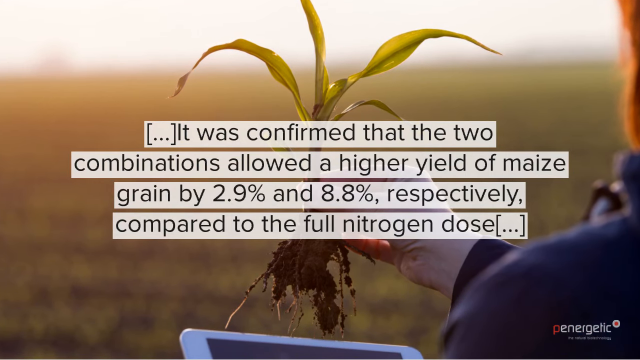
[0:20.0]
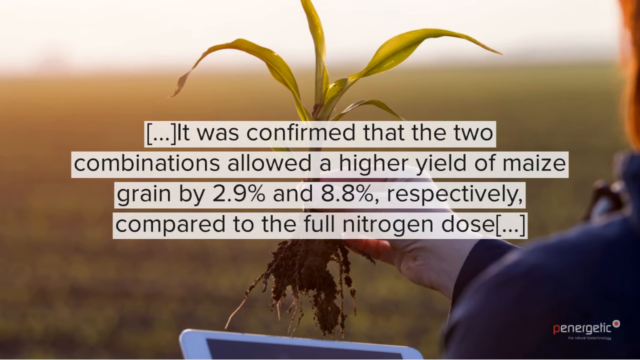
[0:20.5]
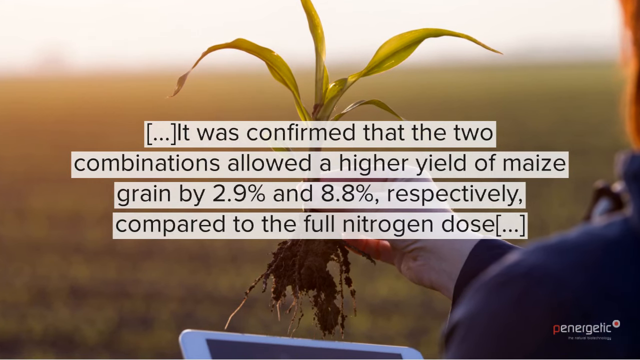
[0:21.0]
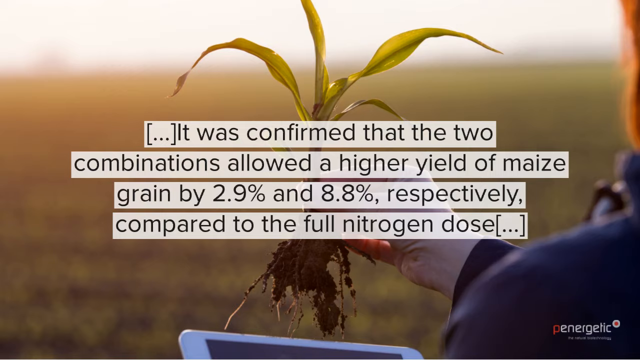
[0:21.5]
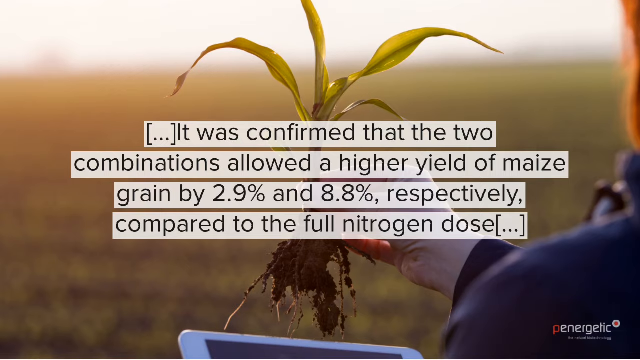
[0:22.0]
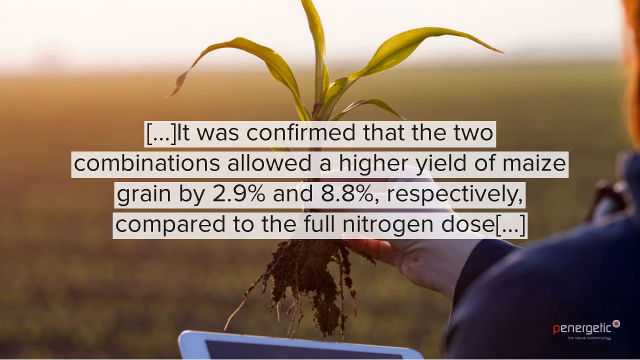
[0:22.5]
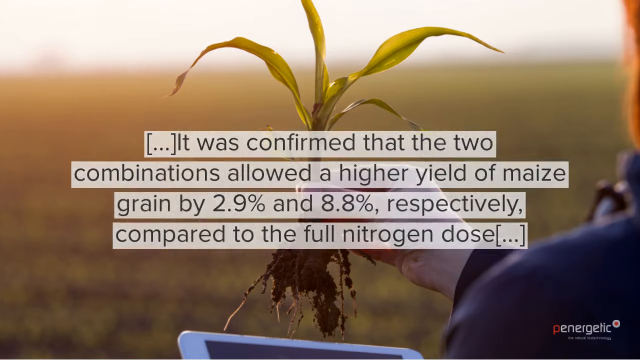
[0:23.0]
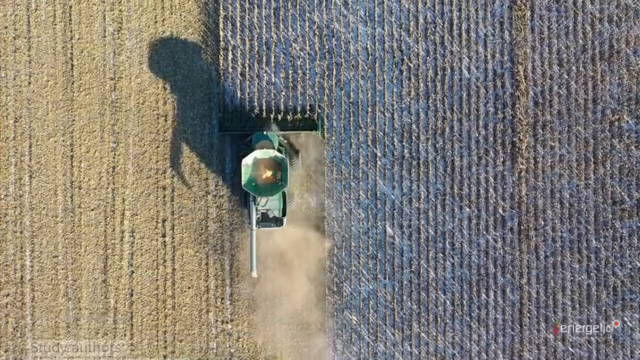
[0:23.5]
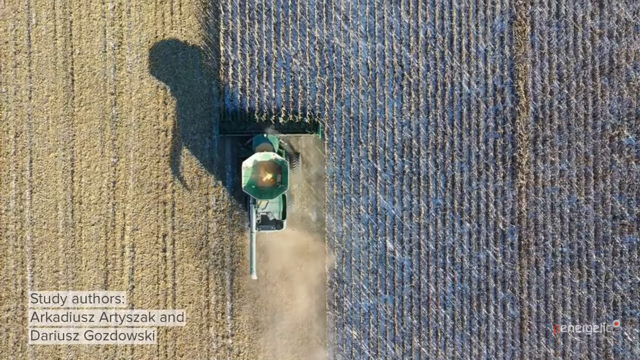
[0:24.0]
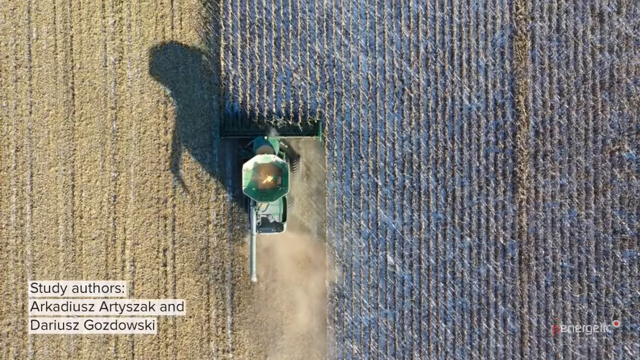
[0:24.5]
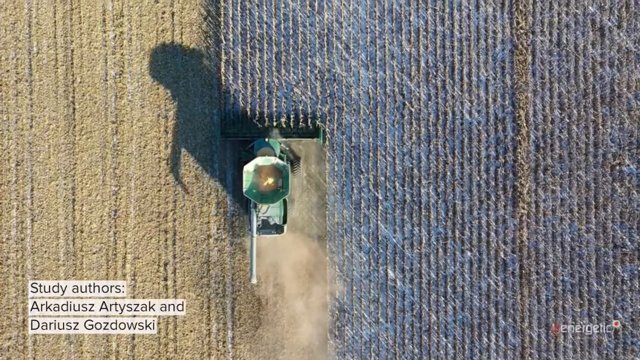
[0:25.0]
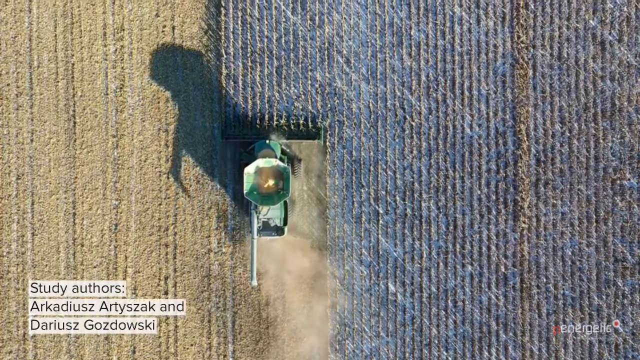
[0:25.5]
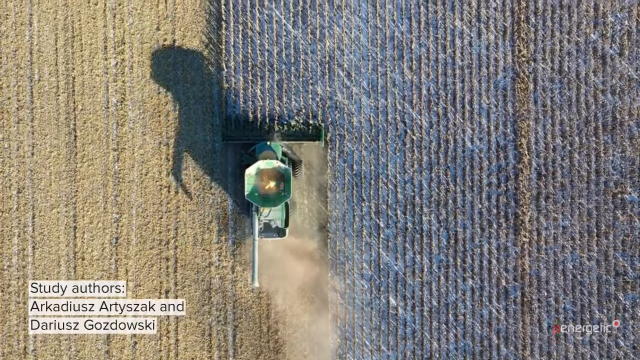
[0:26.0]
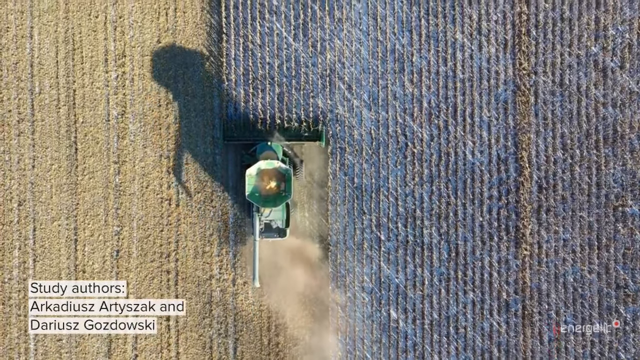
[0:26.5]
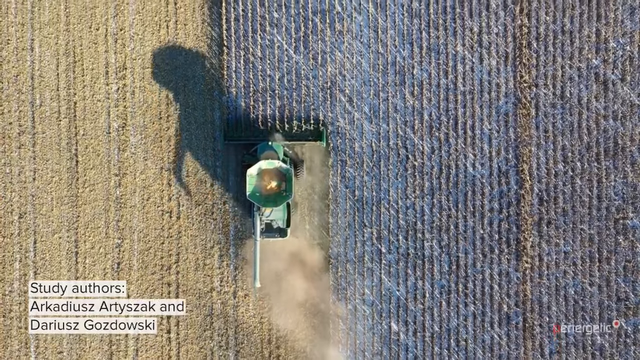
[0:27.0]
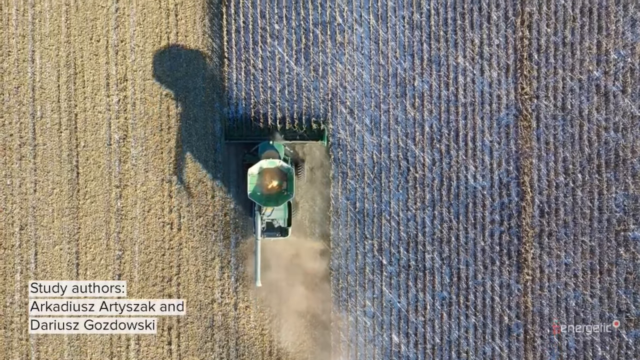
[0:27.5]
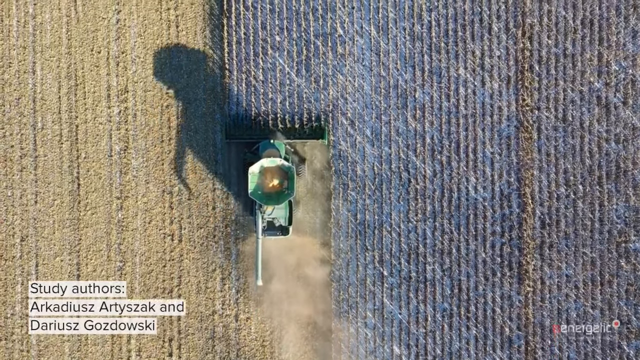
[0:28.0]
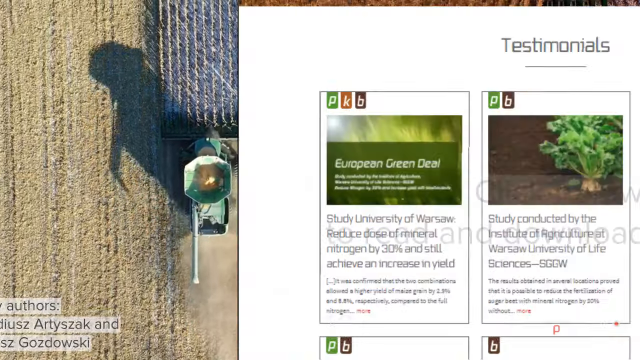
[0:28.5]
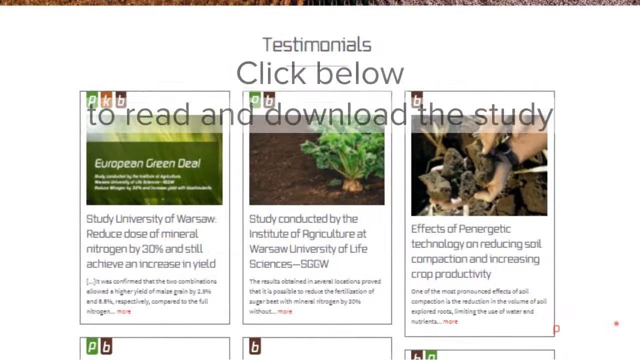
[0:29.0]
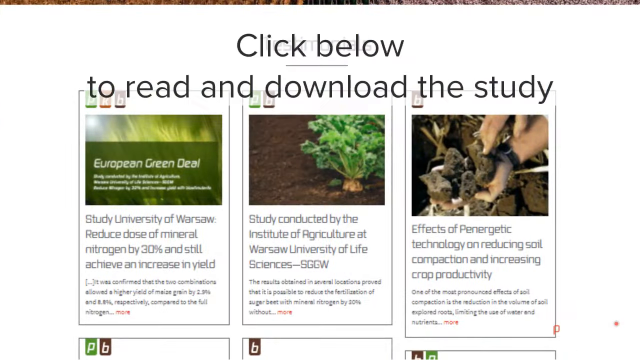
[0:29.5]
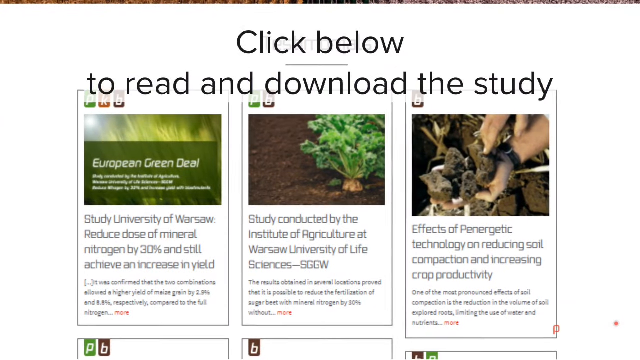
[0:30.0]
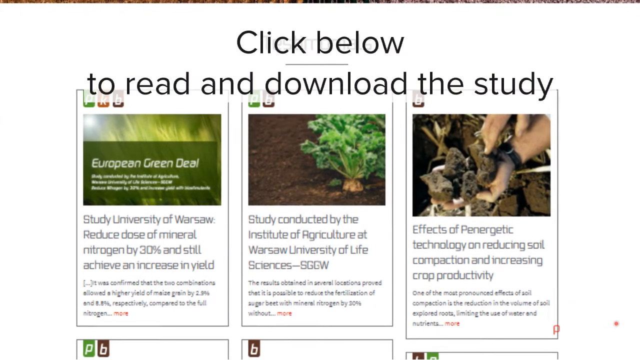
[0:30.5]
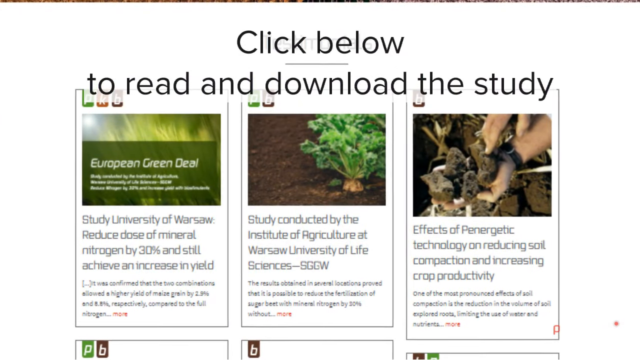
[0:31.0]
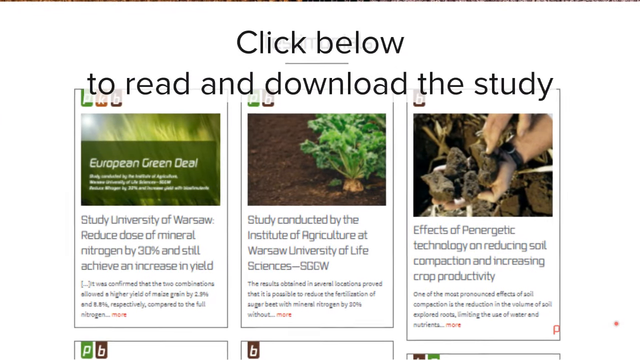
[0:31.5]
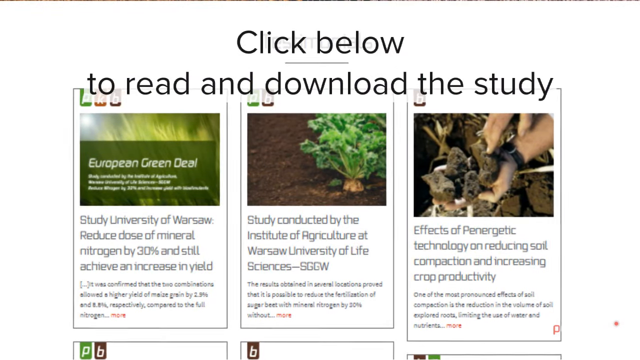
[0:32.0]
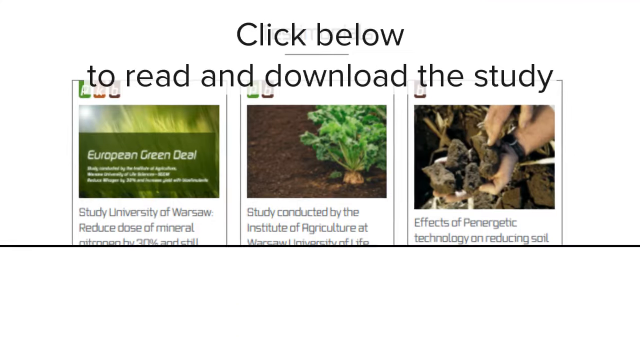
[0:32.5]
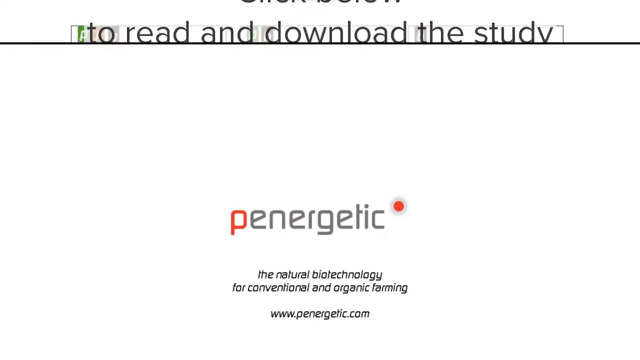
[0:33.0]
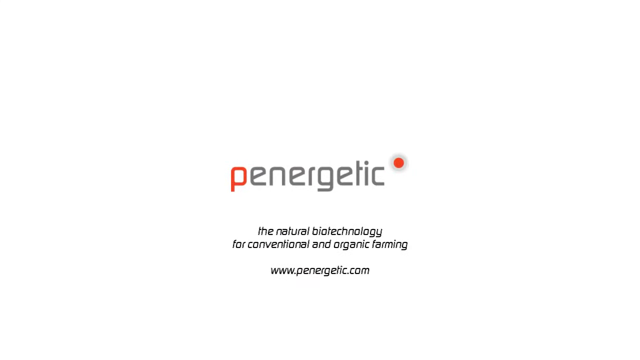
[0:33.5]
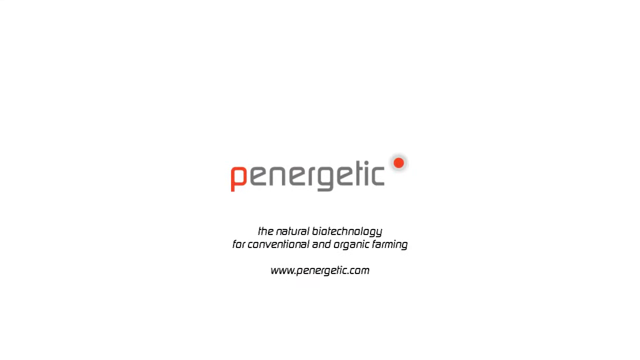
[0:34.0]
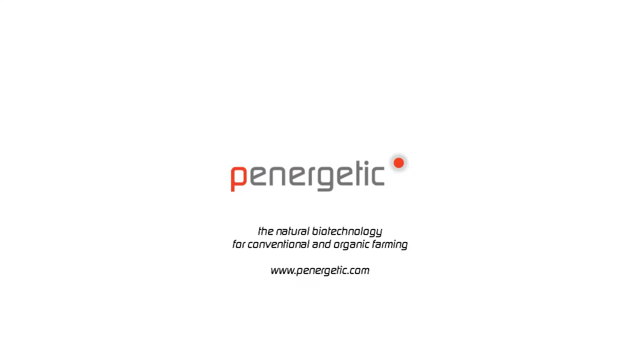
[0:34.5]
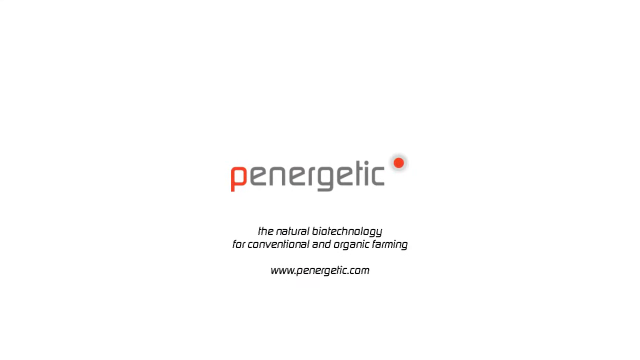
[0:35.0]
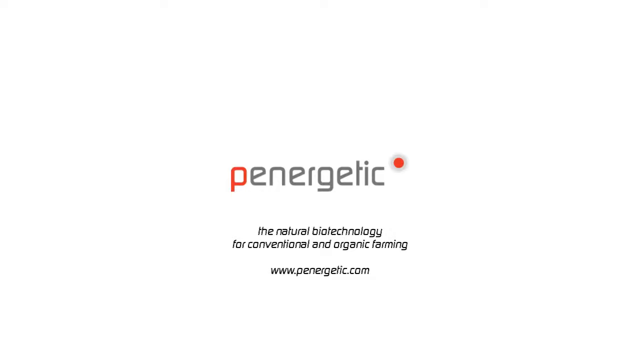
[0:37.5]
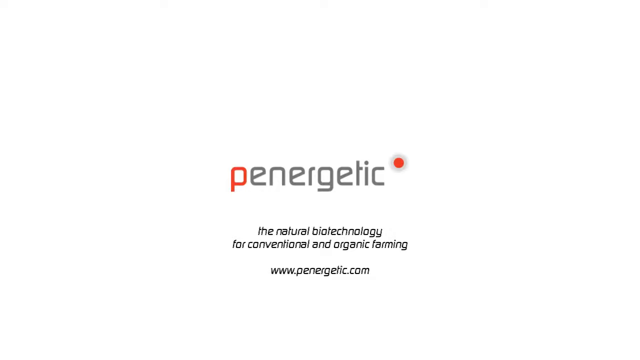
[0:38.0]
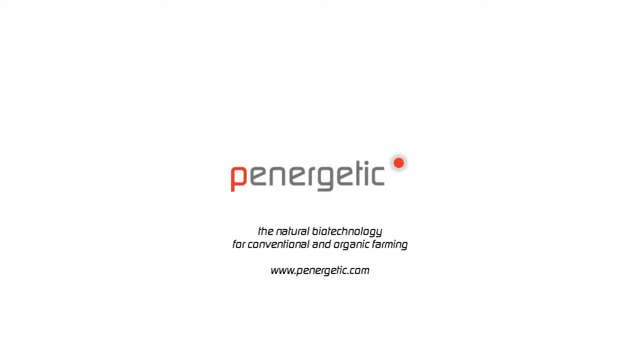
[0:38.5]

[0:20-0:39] A video shows a tractor going through a field and harvesting maize. The maize is blue, and the tractor just keeps going through it. Text states that the study authors include Darius Gozdowski and Arkadiusz Artozak, and then reads "click below to read and download the study." Text about other studies follows: "University of Warsaw reduced dose of mineral nitrogen by 30% and still achieve an increase in yield," "Study conducted by the Institute of Agriculture at Warsaw University of Life Sciences," and "The results obtained in several locations prove that it is possible to reduce the fertilization of sugar beet with mineral nitrogen by 30%." A heading reads "Effects of energetic technology on reducing soil compaction and increasing crop productivity."